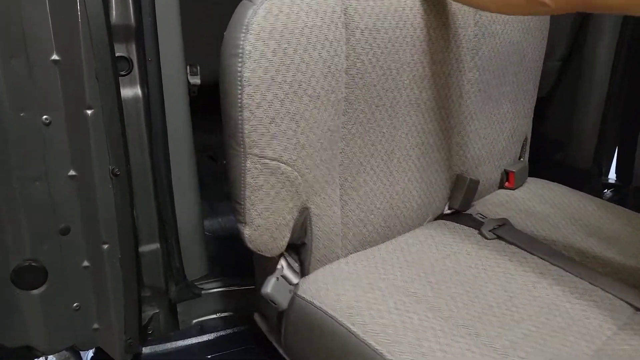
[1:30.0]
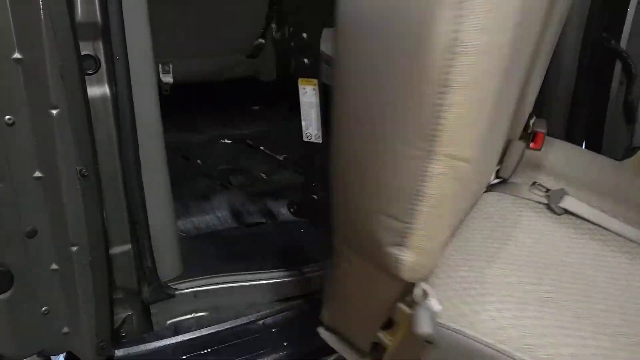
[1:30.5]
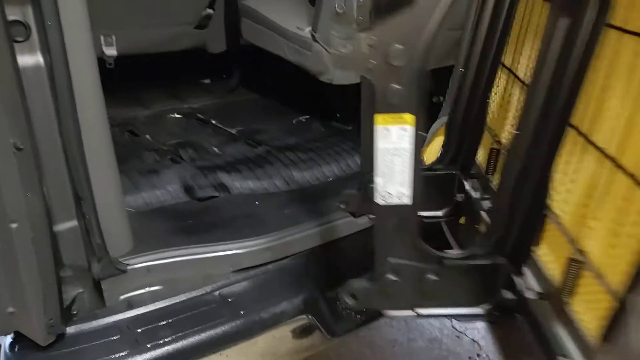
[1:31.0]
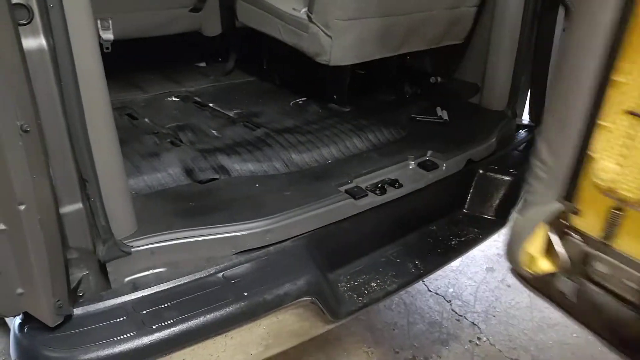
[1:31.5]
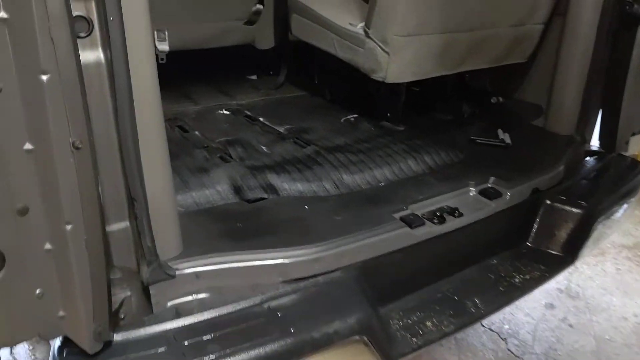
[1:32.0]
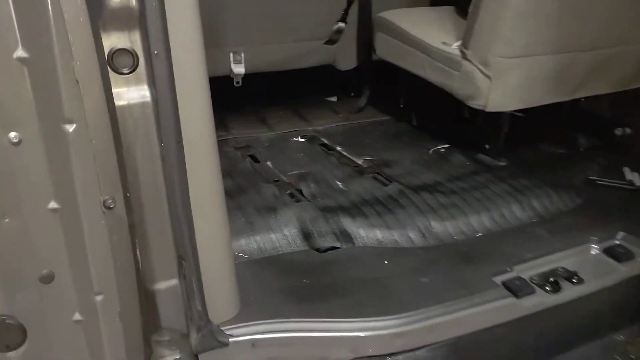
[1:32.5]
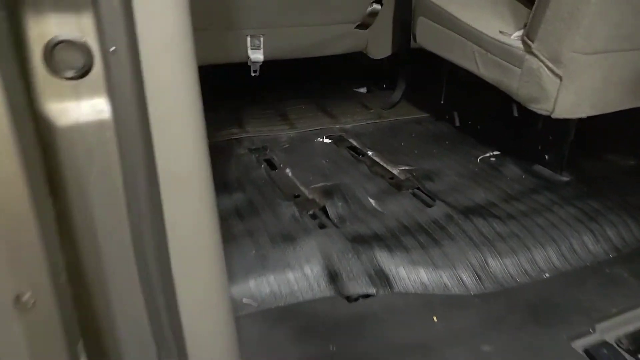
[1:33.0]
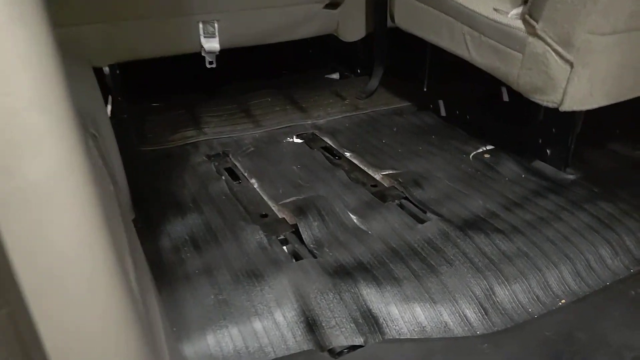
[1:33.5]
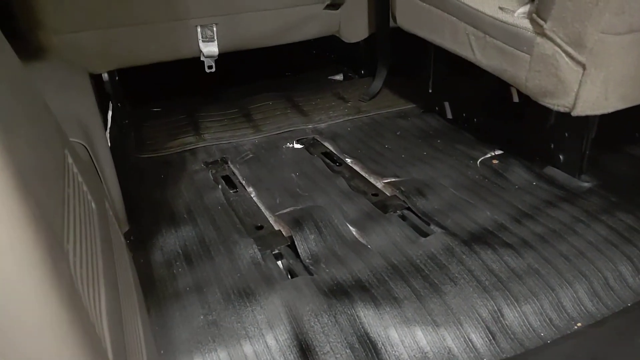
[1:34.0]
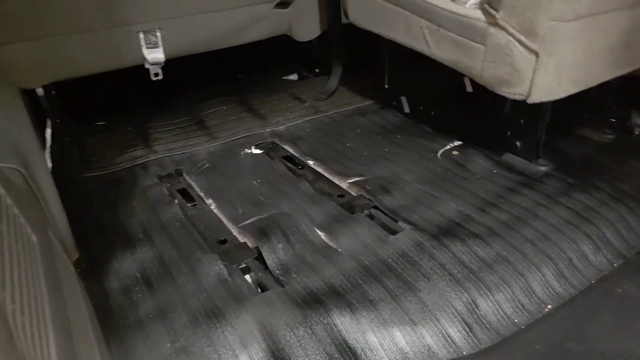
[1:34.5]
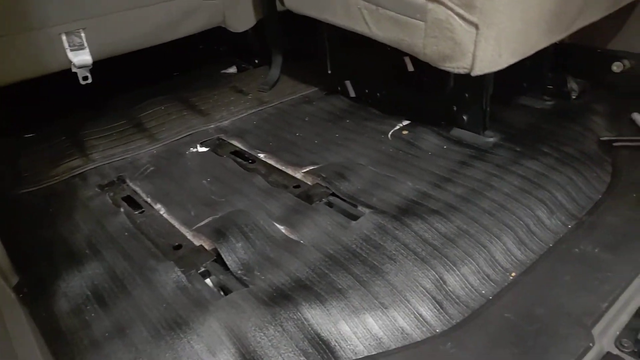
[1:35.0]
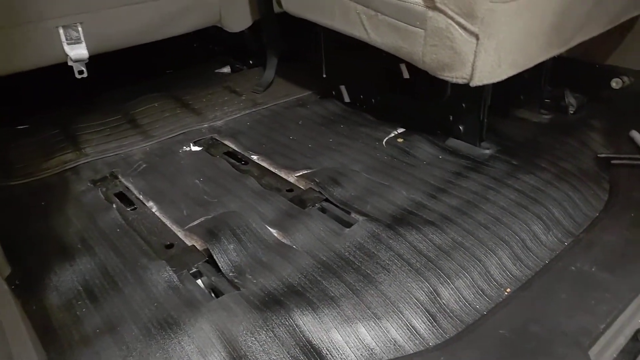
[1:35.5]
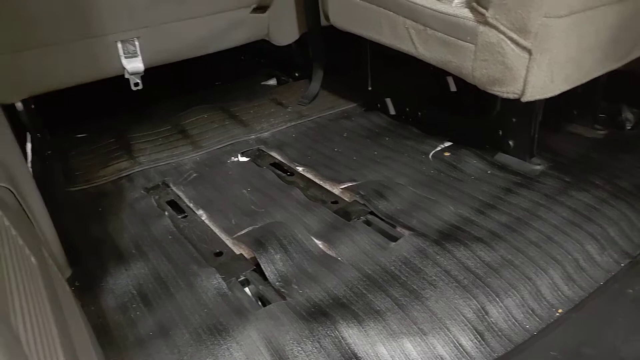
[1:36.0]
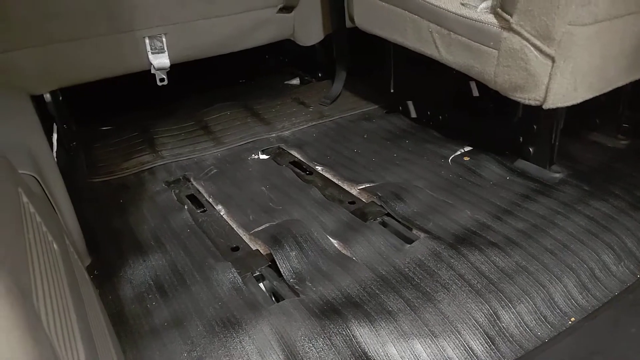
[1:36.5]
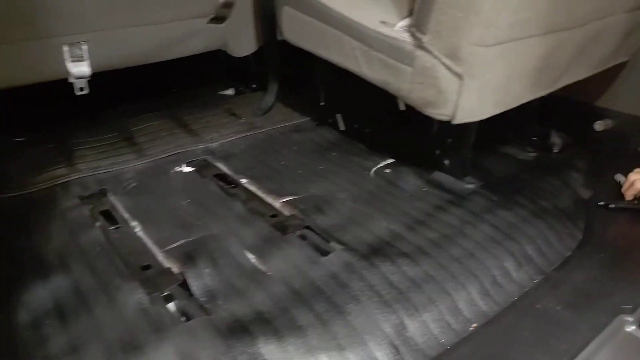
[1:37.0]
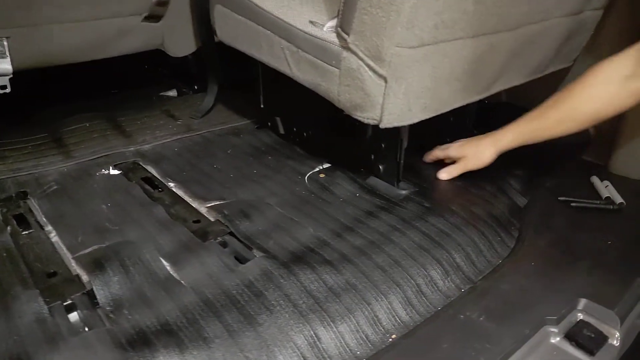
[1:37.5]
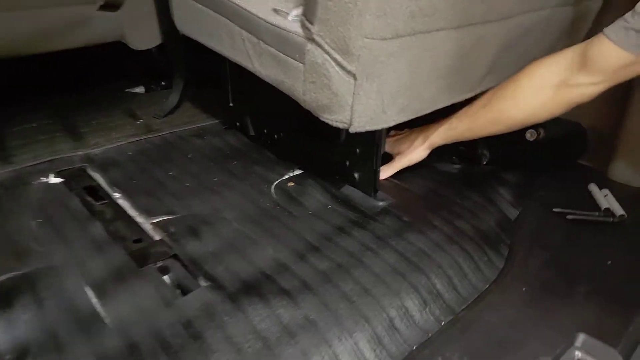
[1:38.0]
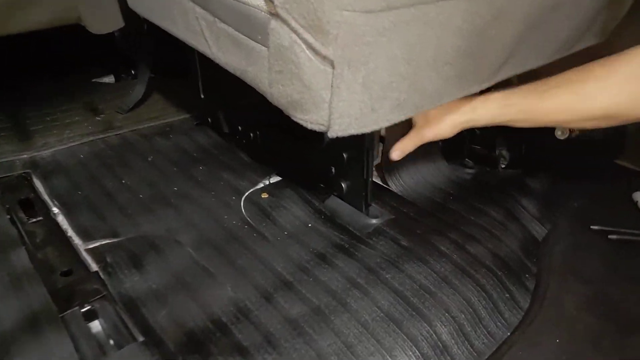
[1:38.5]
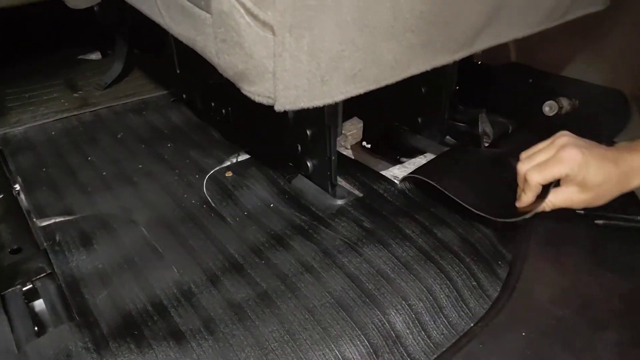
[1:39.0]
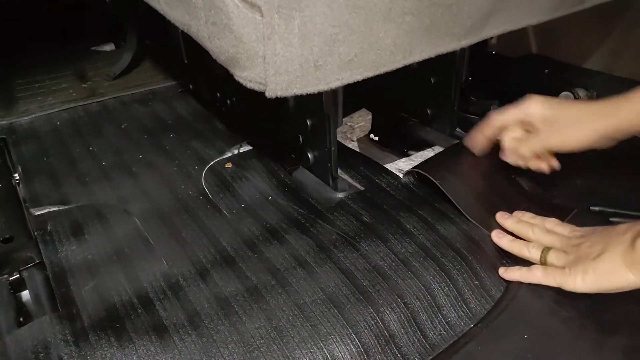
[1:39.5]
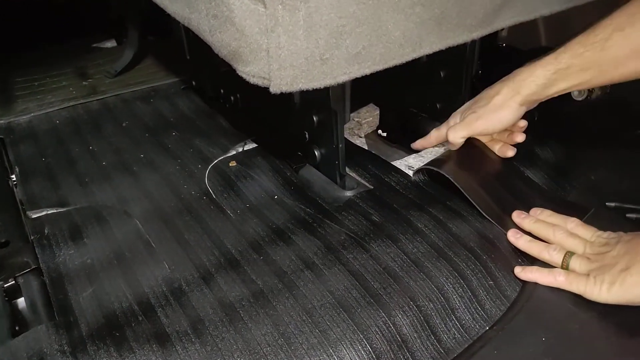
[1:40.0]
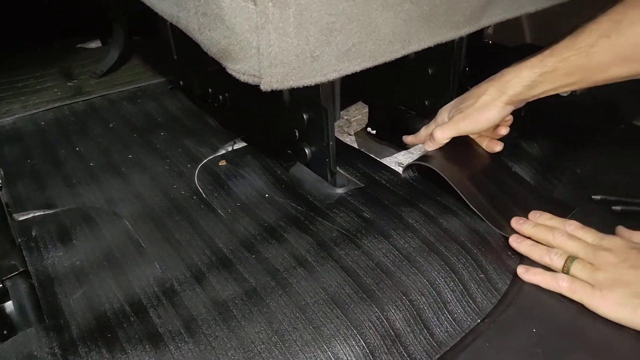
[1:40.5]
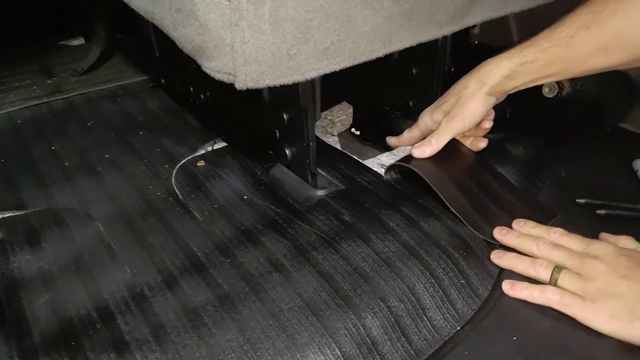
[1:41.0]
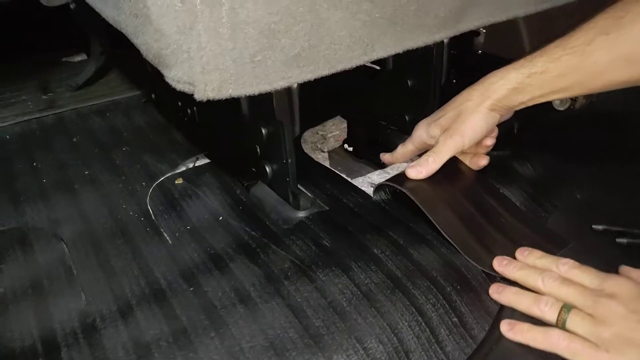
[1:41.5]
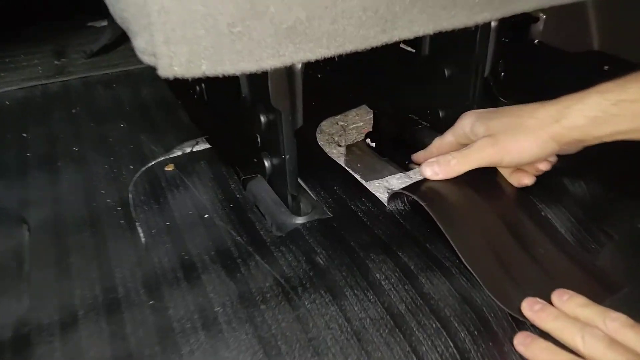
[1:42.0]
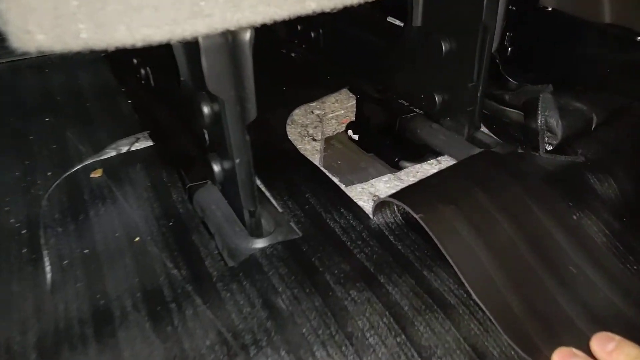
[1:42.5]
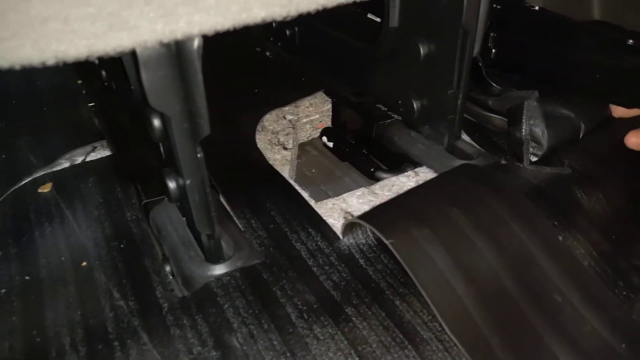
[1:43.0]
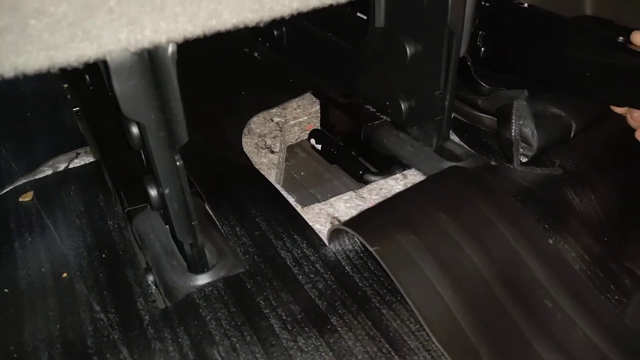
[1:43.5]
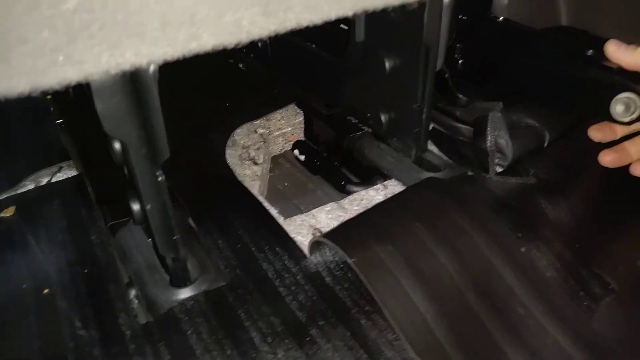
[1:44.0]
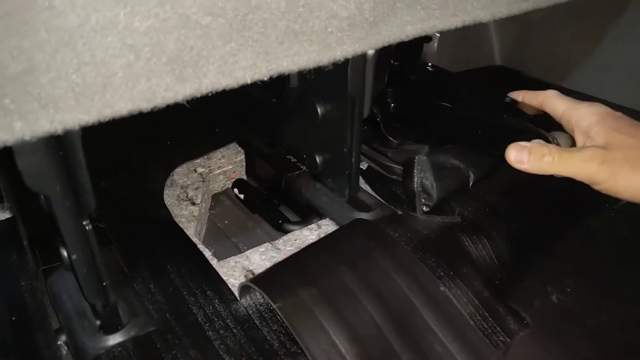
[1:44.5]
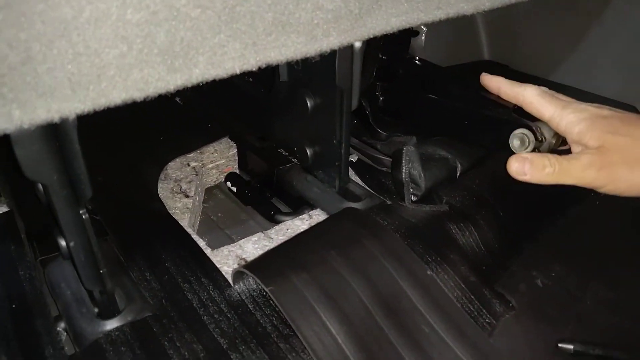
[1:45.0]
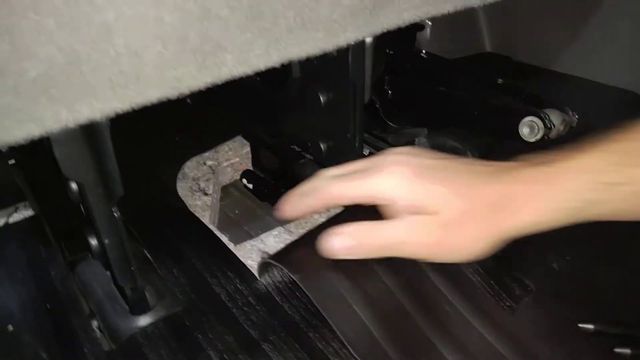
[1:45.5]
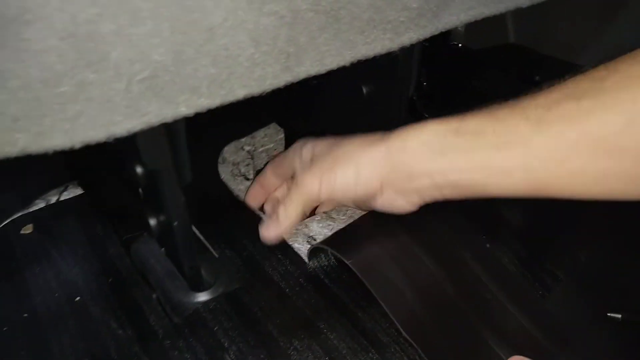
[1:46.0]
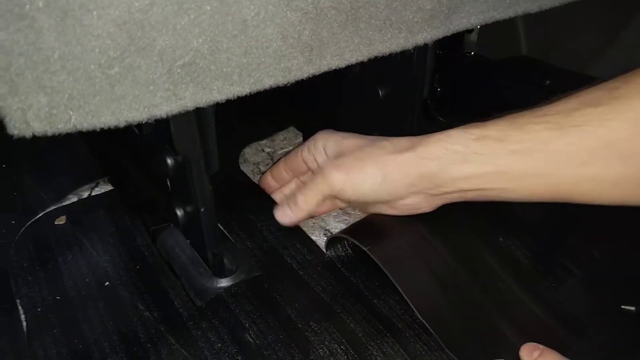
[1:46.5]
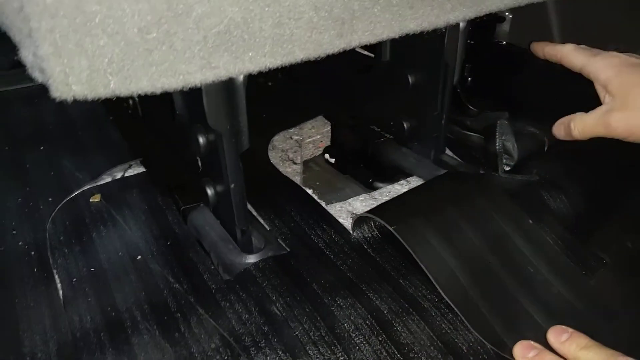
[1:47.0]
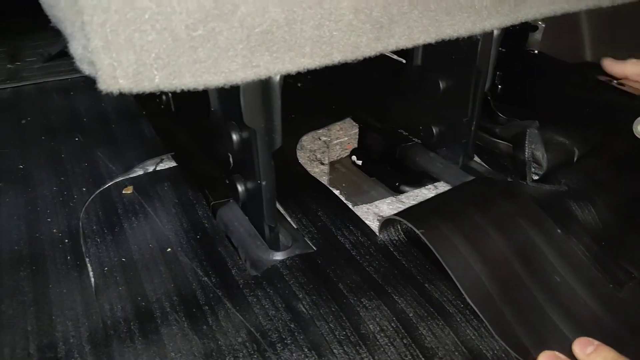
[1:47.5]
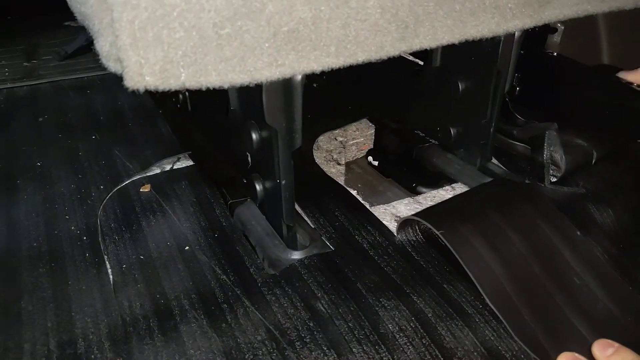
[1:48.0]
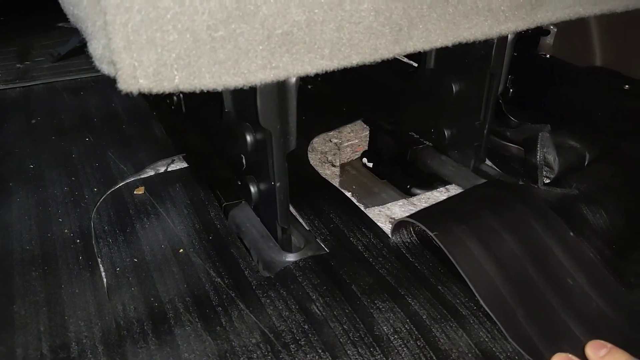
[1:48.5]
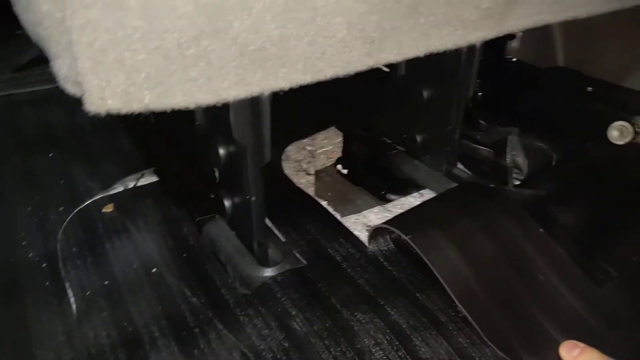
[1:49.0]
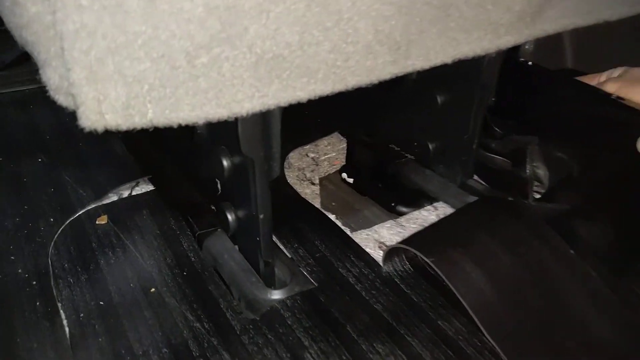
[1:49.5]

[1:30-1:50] The person removes the seat fully from the vehicle, turning it slightly as they do so, which gives a view of the underside of the seat. The camera focuses first on the empty matting and then moves on to the next visible seat. This seat is slightly narrower, presumably so there is a walkway for access to the rear seat. The person uses their right hand to show that there is a similar lever underneath this seat, which appears to be surrounded by what looks like foam. They then move their right hand to another piece of metal on the right-hand side of the seat, which is black with a grey circular part, and move their hand around on it before returning to the lever under the seat.